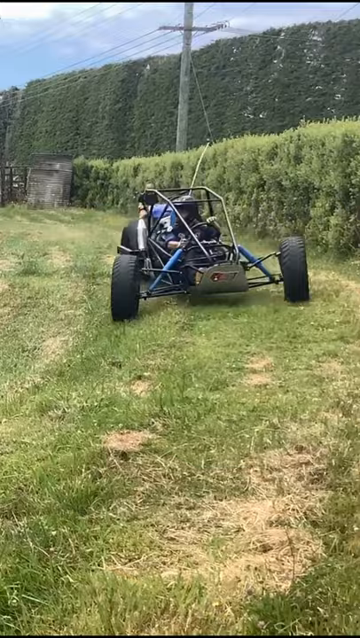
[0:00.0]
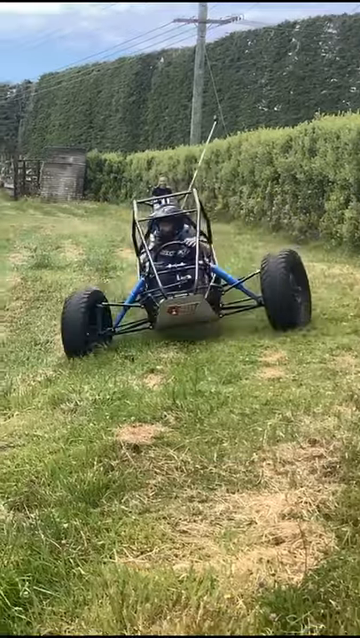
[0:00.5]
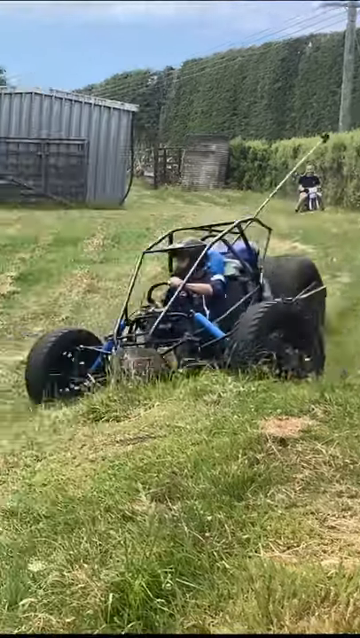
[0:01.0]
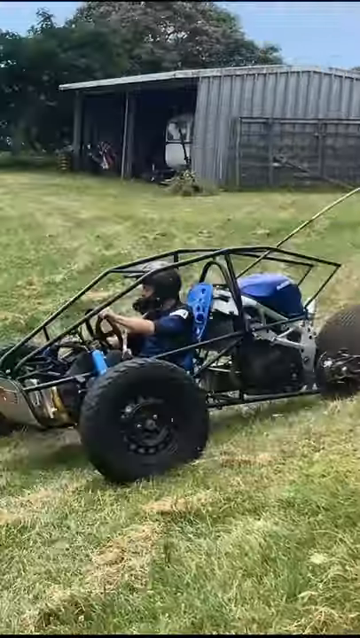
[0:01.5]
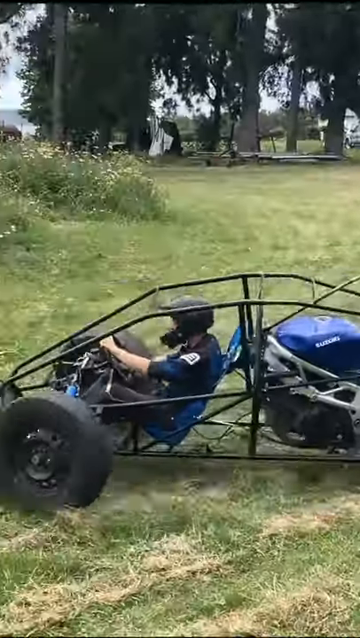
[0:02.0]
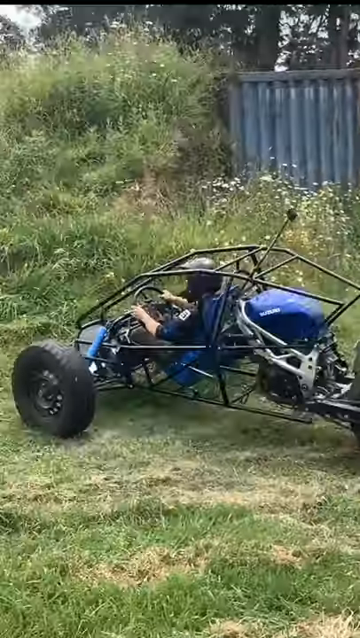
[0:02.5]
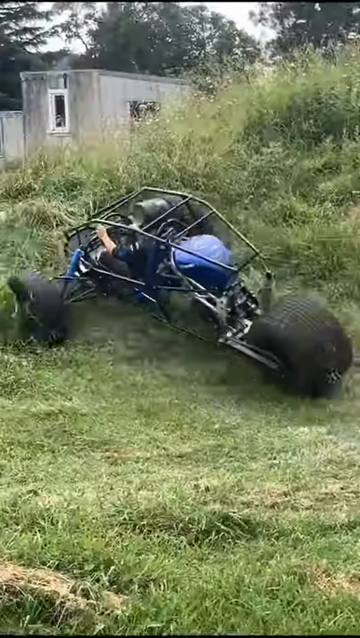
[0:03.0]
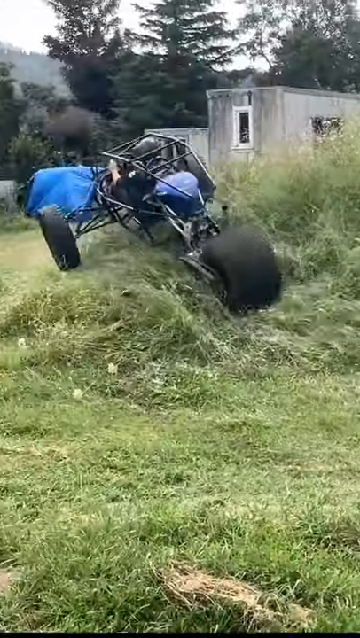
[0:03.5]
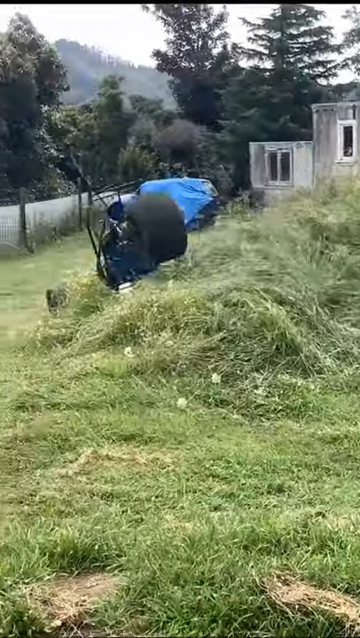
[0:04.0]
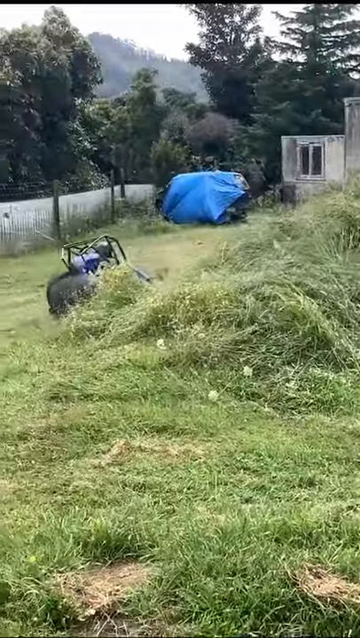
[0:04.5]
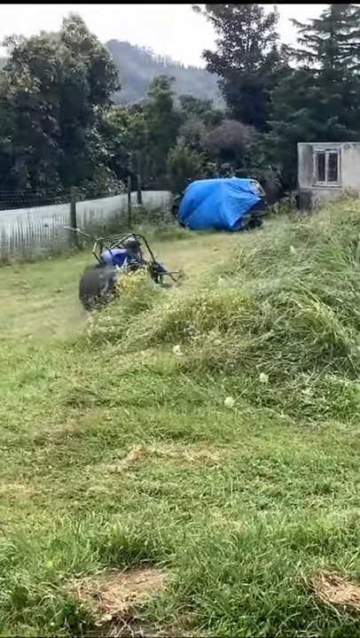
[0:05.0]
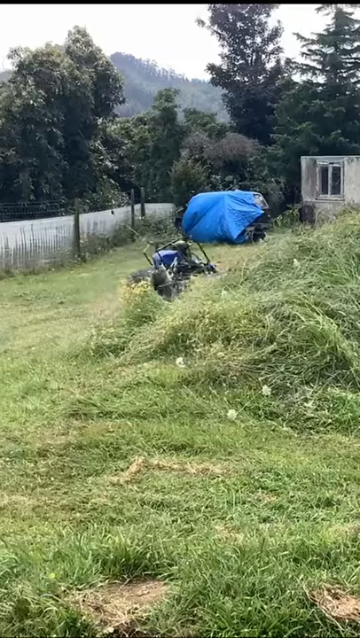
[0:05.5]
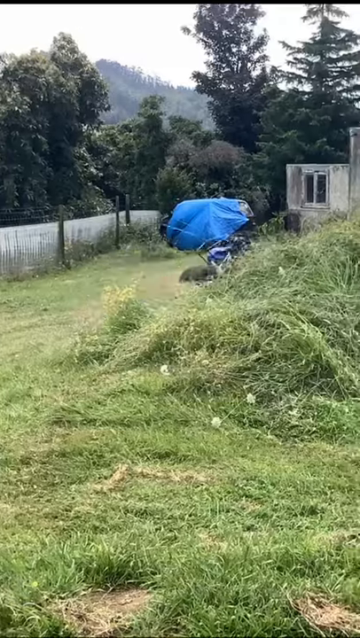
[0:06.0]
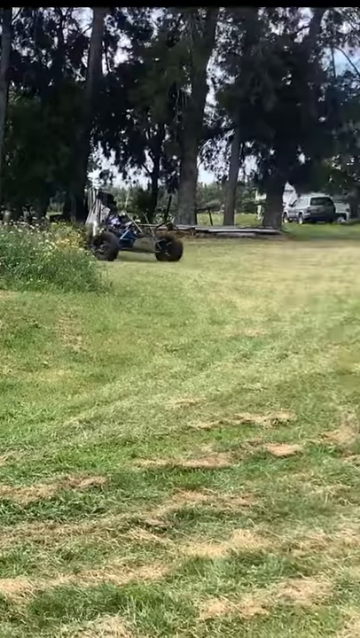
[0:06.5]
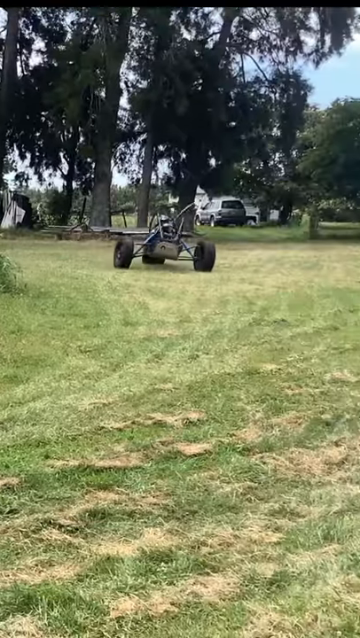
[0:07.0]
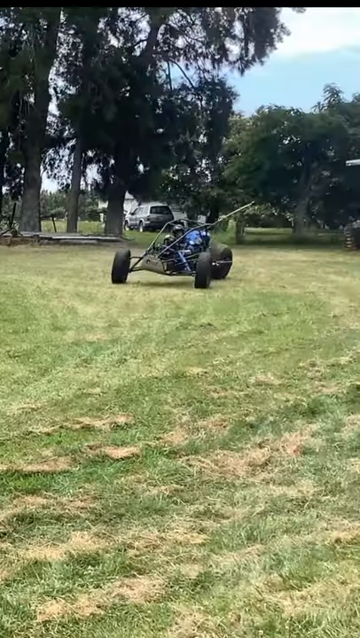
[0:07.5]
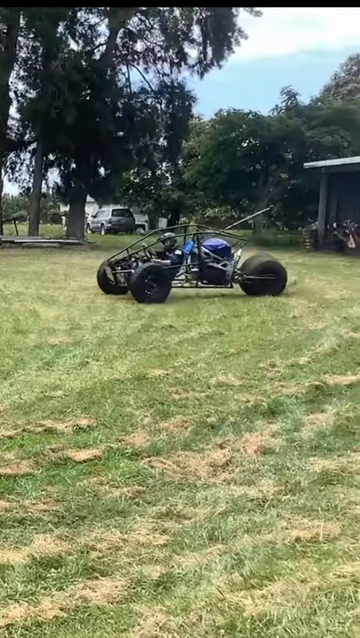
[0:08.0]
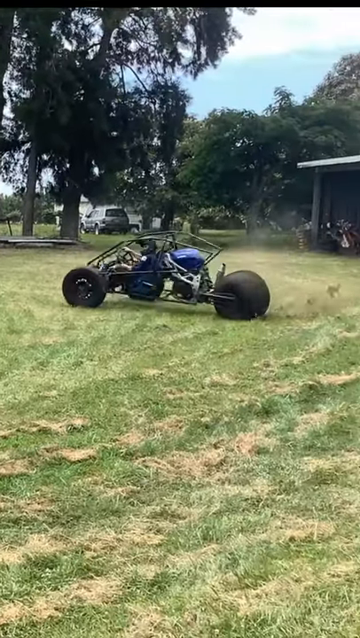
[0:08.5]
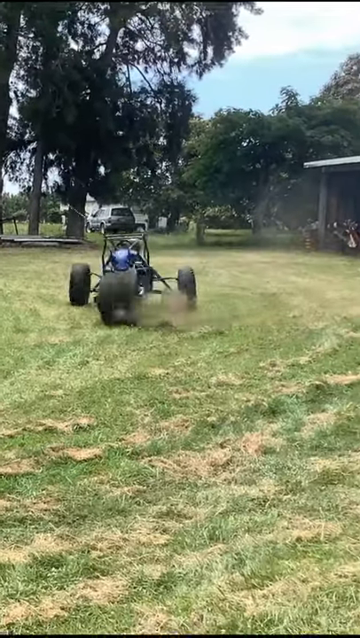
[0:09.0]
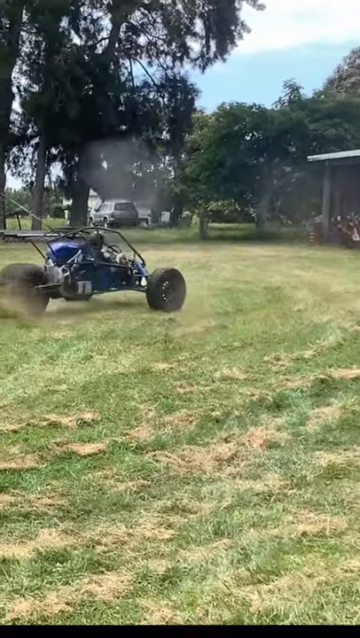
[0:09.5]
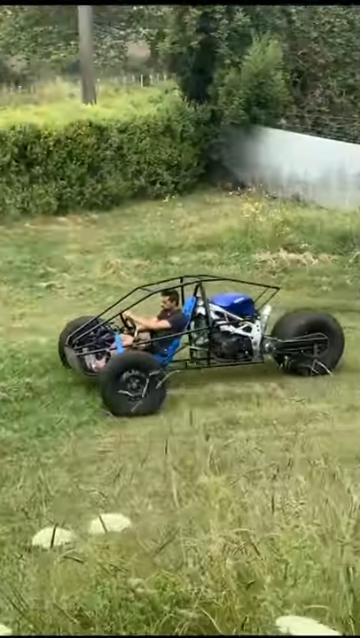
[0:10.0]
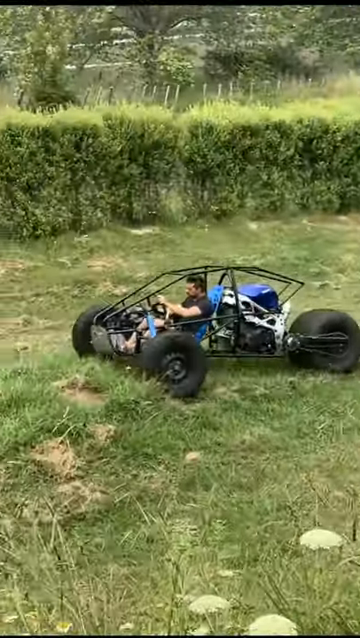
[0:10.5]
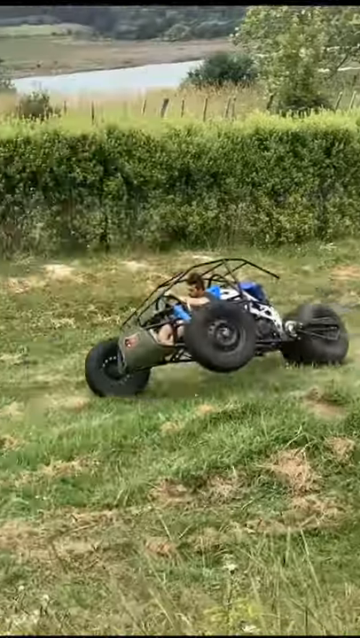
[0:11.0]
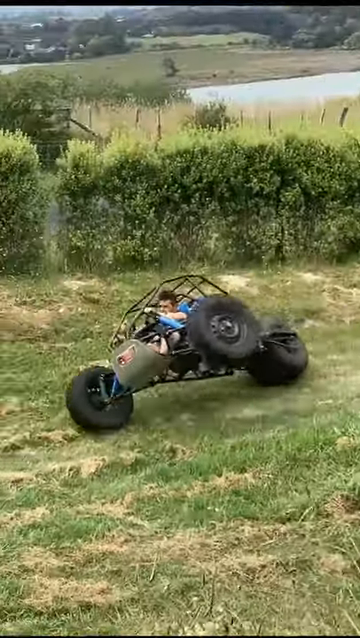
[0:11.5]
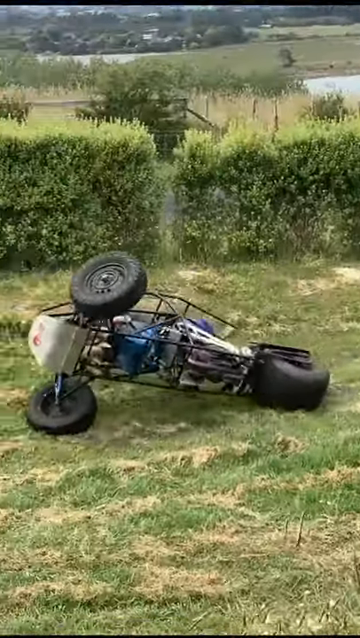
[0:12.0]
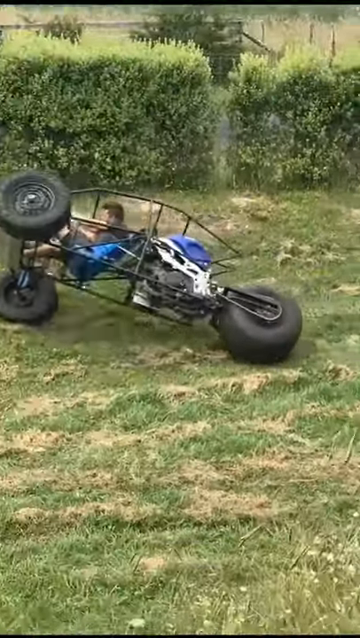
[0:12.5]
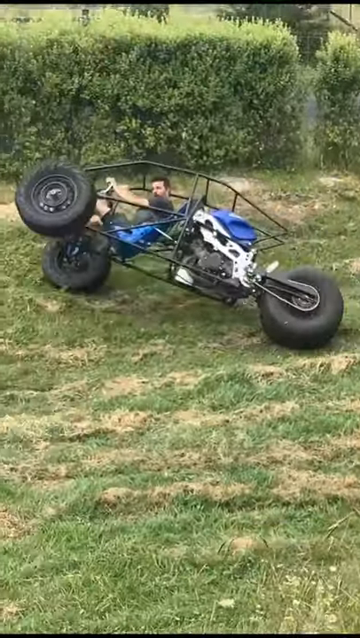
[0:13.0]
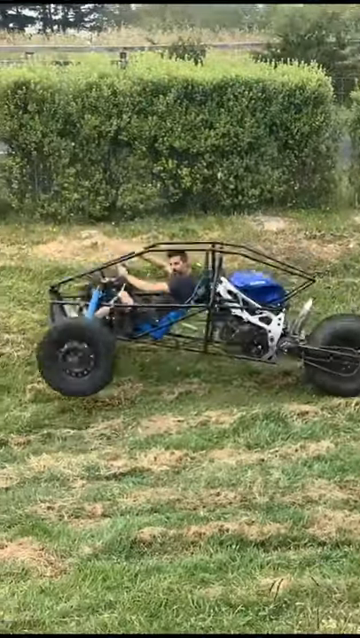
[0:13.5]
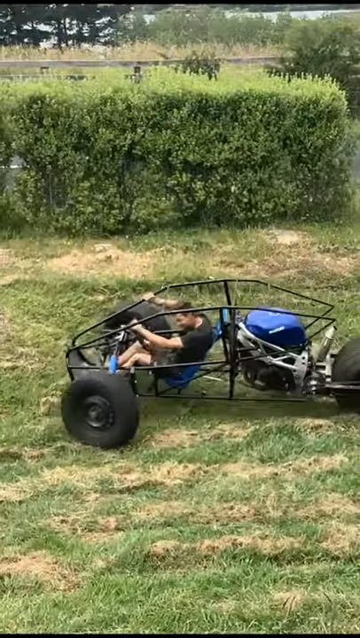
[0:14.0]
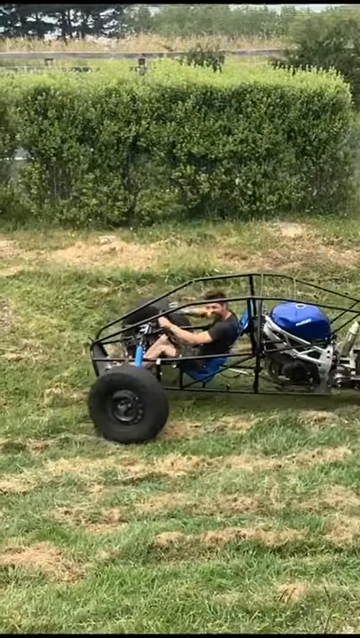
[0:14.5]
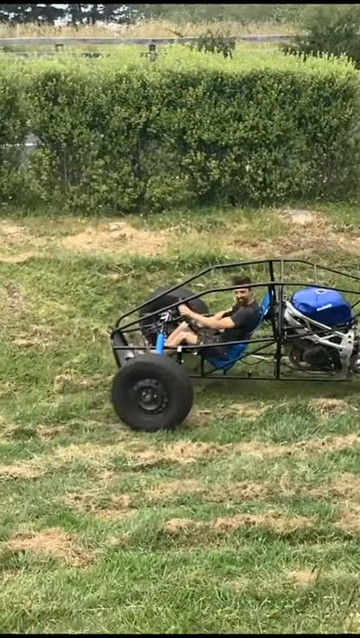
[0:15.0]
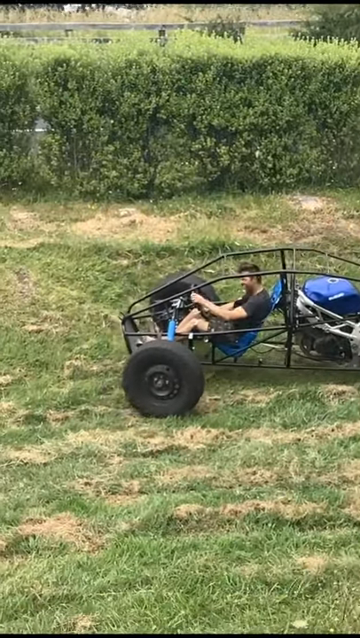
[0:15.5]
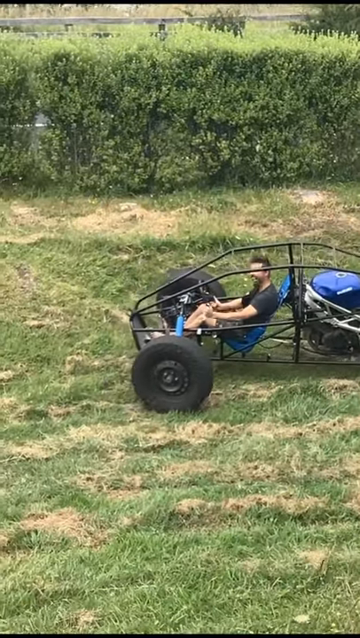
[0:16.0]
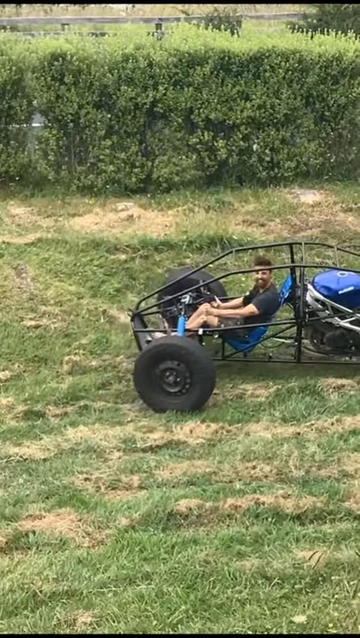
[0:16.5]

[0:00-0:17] What looks like a three-wheeler ATV is ridden across a very grassy, somewhat hilly area, possibly a farm or some type of residential area with a lot of grass. A man wearing a helmet sits low in the seat and performs different stunts: he kind of goes up on the sides of the wheels, spins in little circles, and drives over some of the hills. In the distance there are a lot of trees and some bushes, and toward the front there is what looks like a fence that may be white. It is daytime, and the sky looks somewhat blue and somewhat sunny. A couple of buildings are visible; they look more like storage buildings, though they could possibly be a living structure.